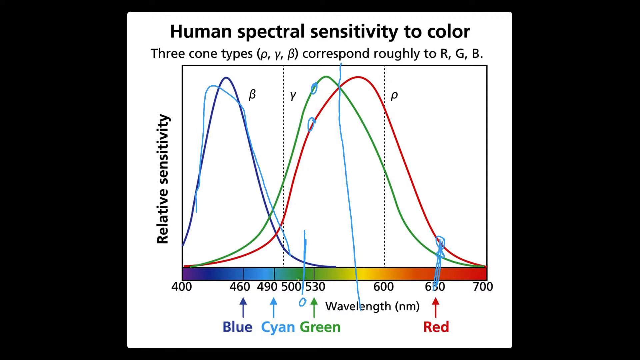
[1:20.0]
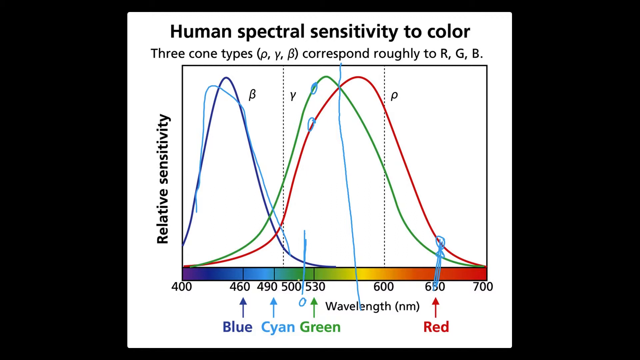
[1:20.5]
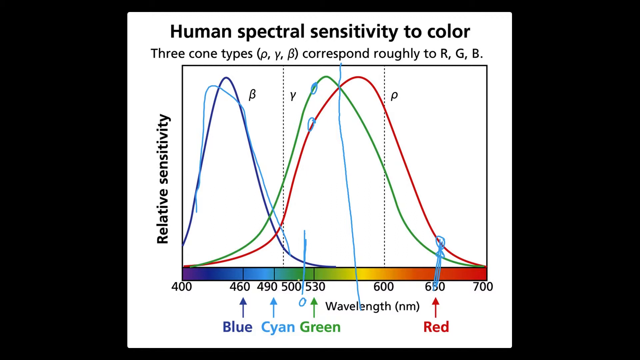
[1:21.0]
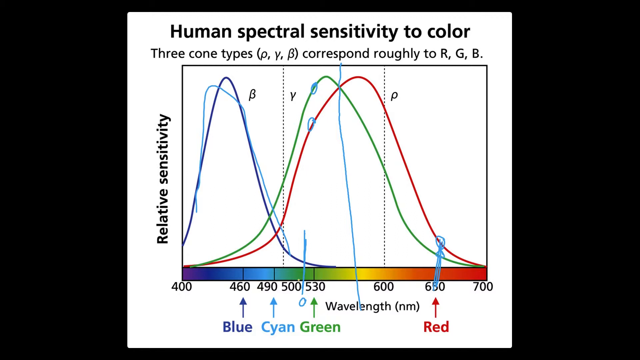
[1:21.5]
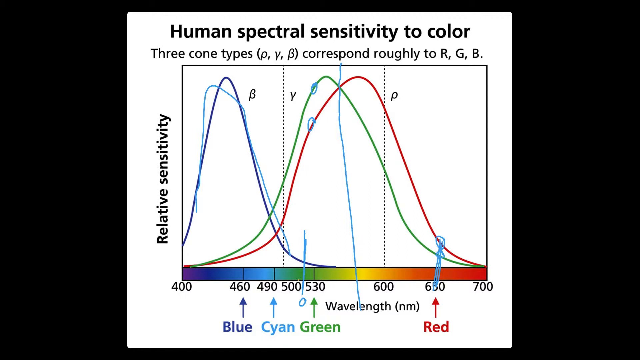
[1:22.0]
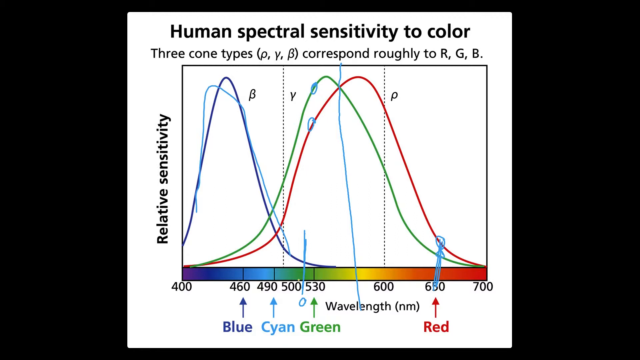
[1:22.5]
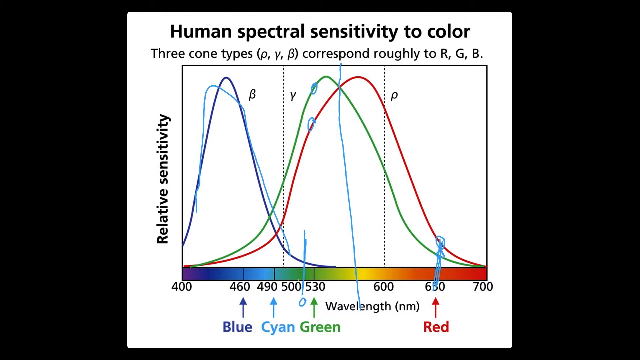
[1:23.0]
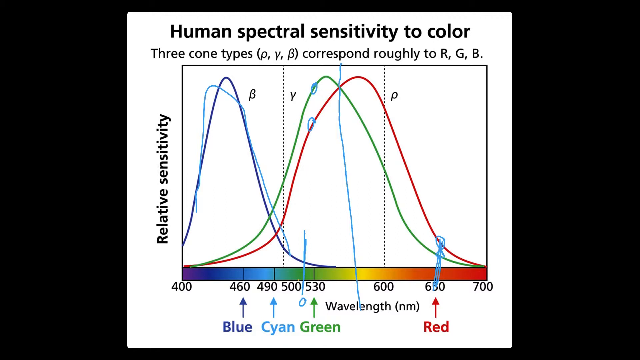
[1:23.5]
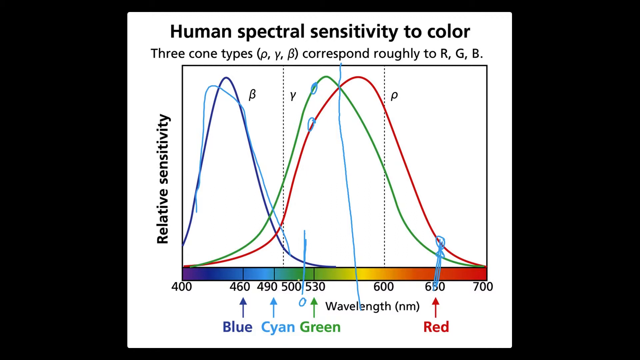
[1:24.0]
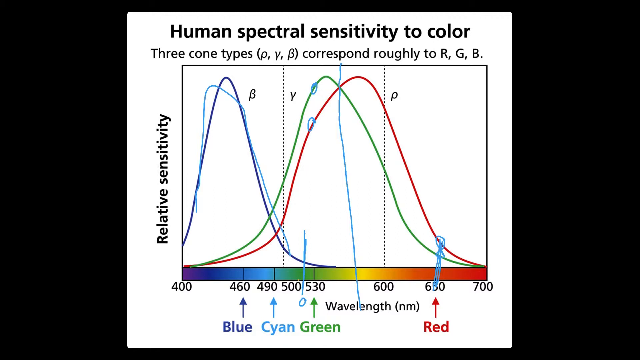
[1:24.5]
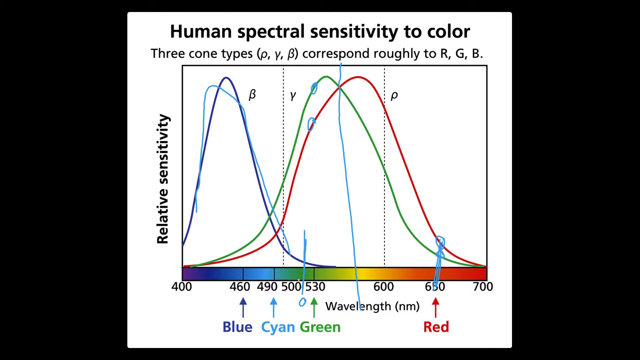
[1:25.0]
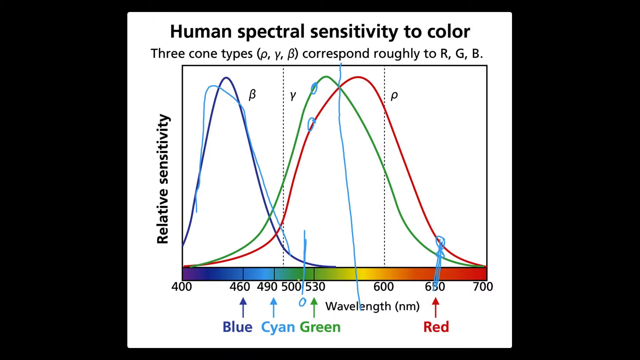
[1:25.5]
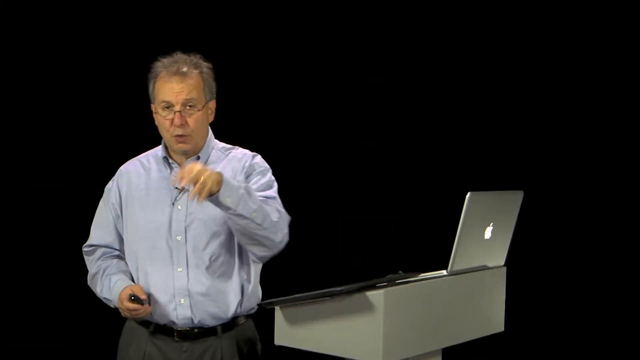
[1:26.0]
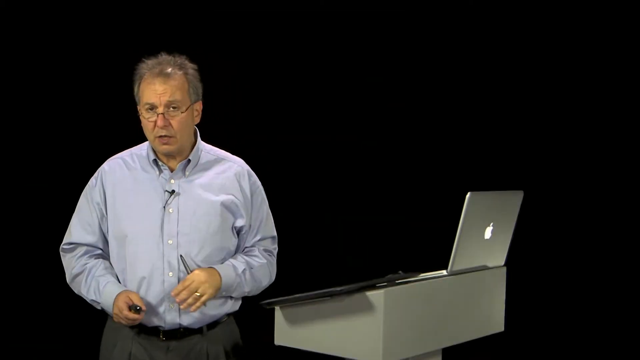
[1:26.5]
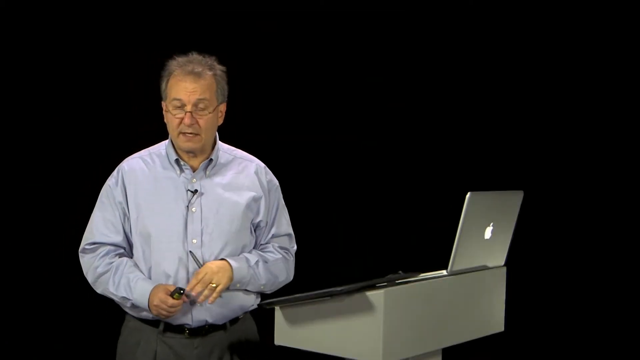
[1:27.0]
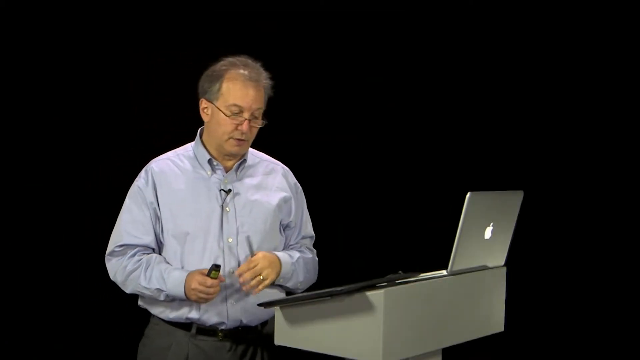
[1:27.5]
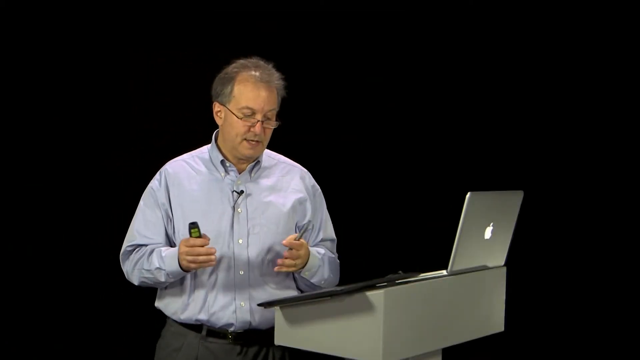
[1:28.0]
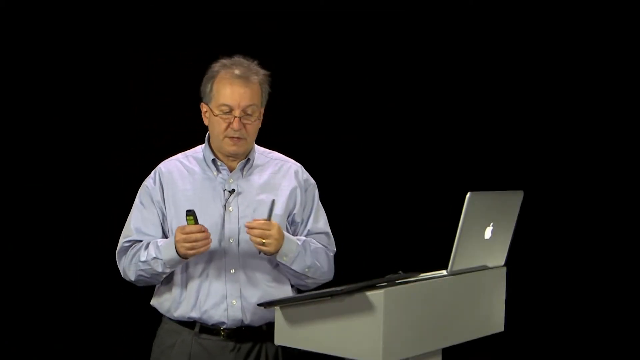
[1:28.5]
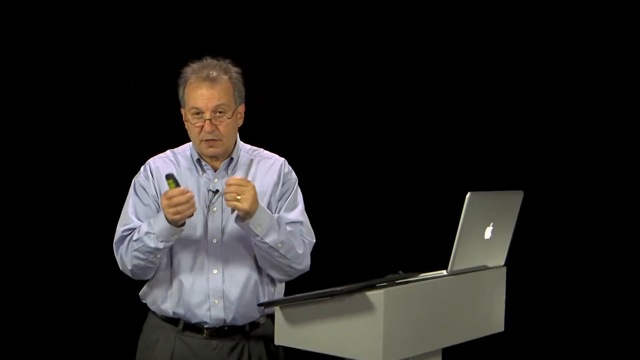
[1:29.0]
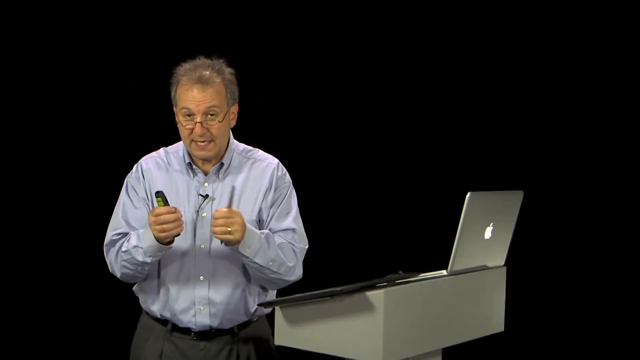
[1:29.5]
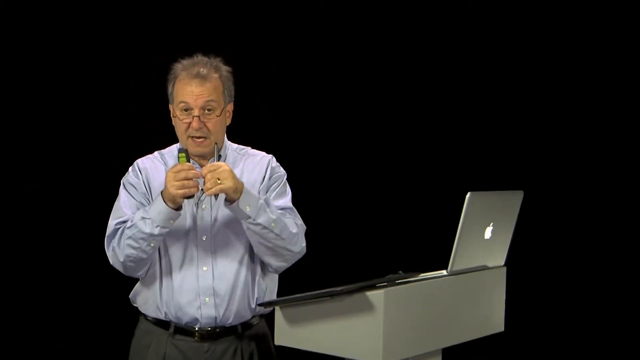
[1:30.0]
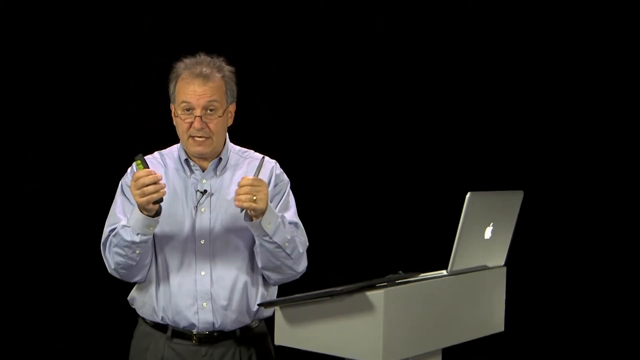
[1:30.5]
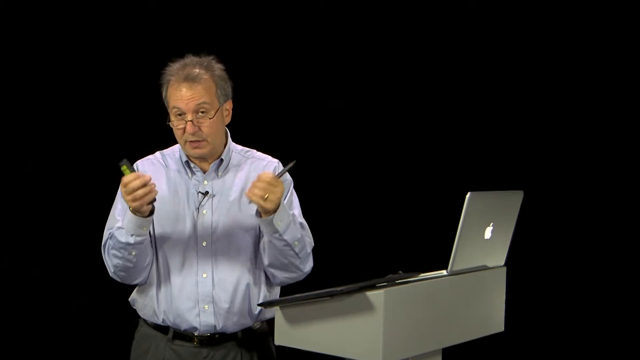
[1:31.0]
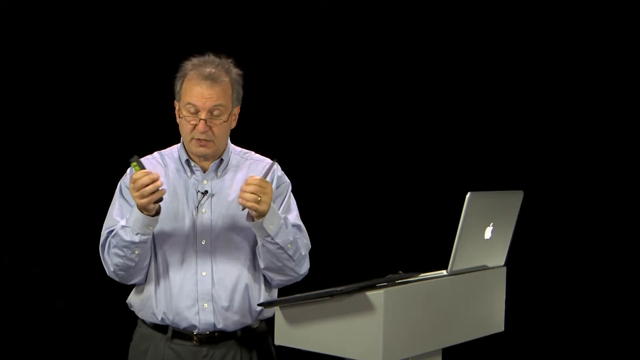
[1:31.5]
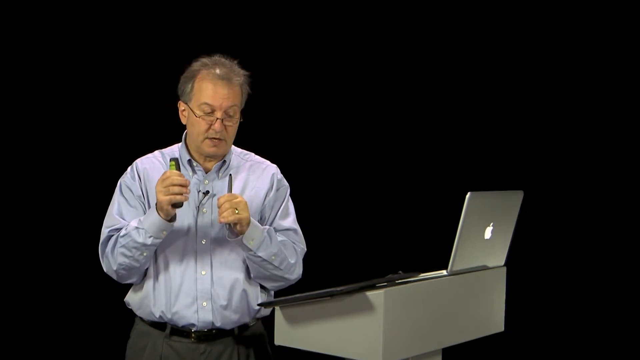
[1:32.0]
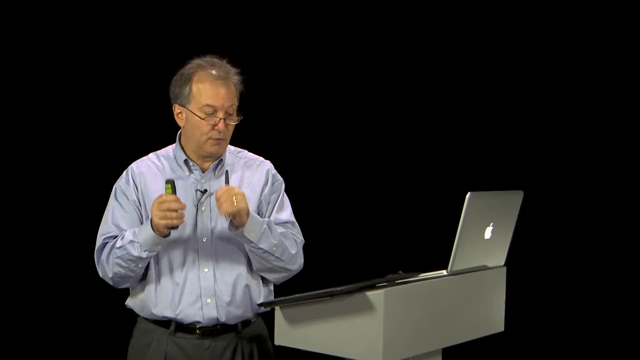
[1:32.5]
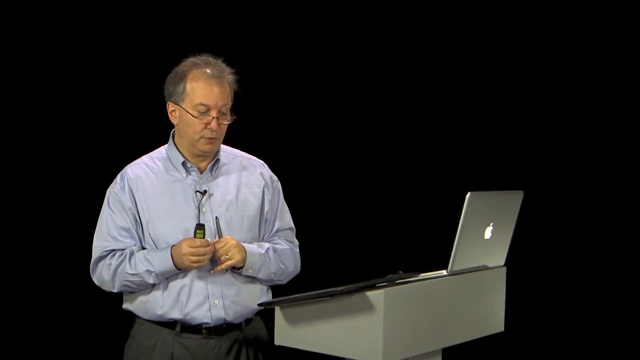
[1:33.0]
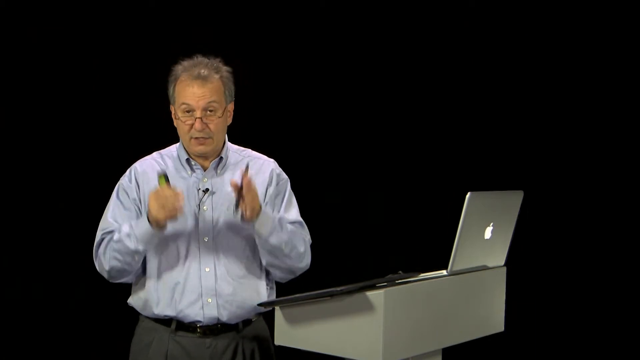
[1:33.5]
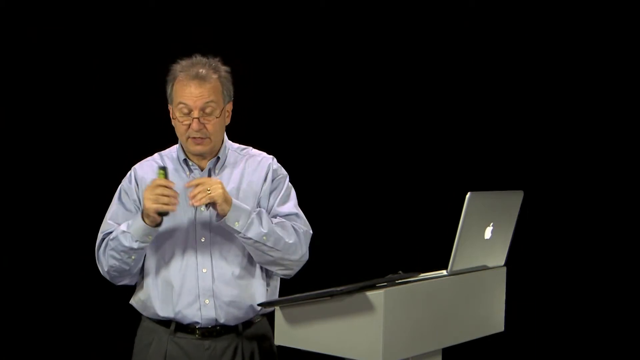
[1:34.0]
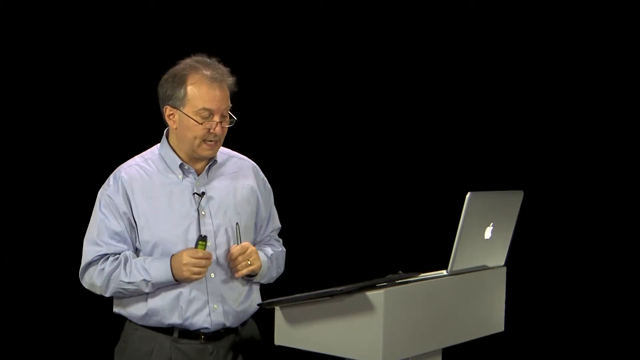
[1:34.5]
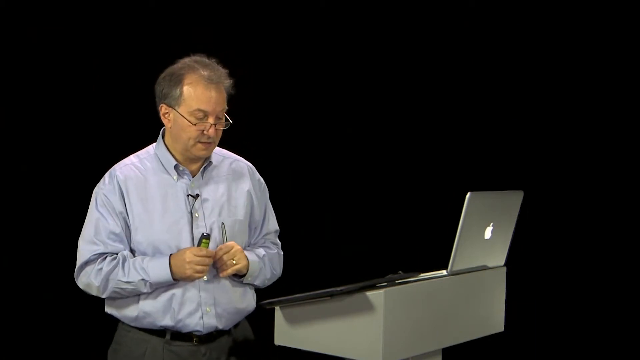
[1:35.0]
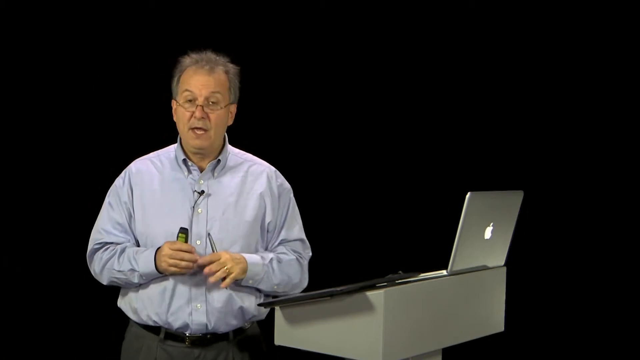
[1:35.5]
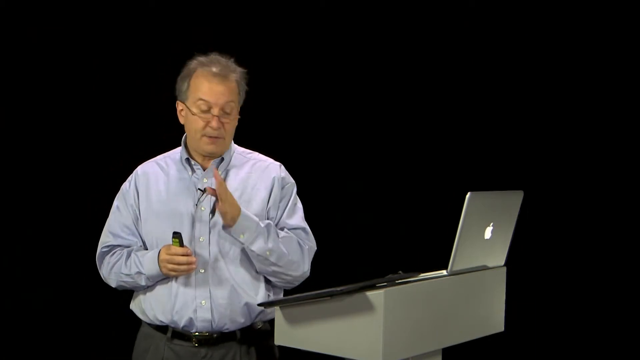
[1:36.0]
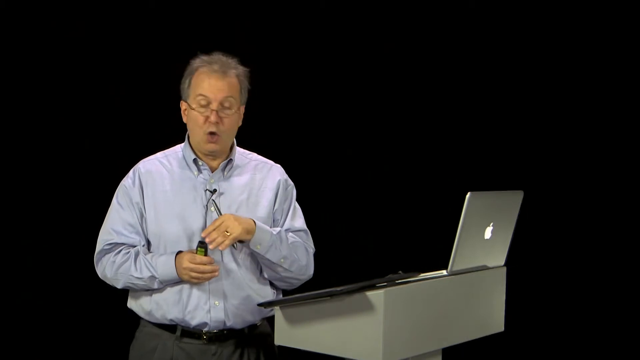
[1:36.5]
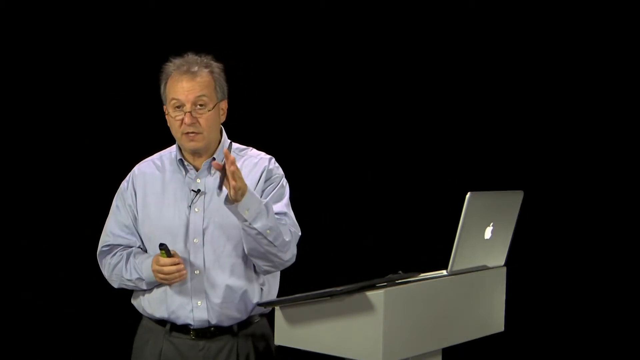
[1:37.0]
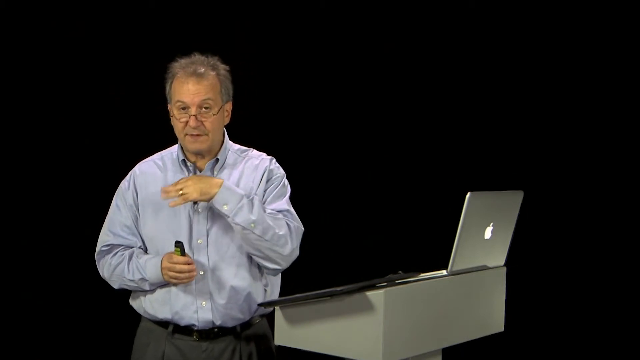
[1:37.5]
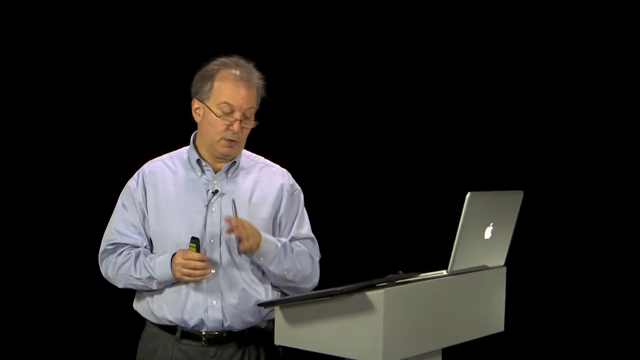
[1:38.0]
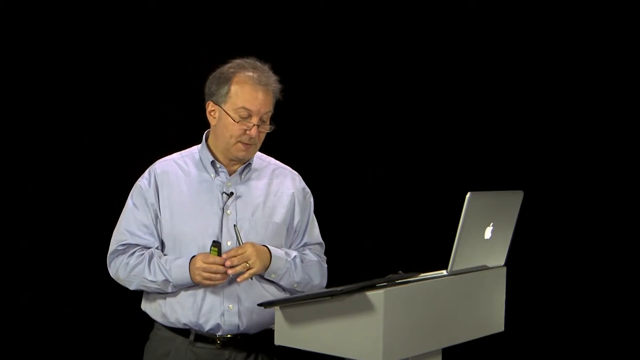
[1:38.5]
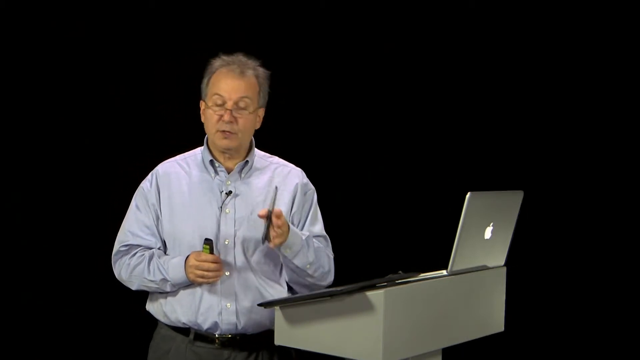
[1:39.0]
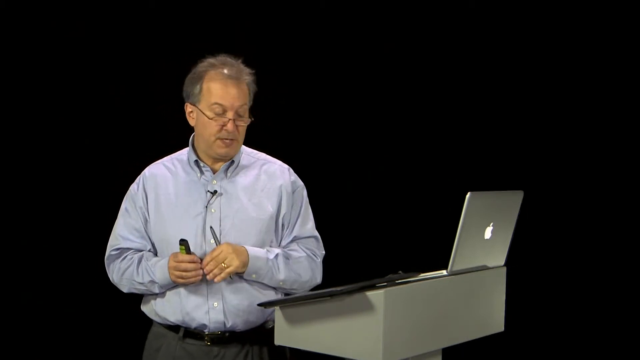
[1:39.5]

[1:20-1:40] The human spectral sensitivity to color graph is shown at the forefront of the screen, with relative sensitivity on the y-axis and wavelengths on the x-axis corresponding to the different types of cones. The graph's colors are on top of a white background. The background is completely black, and a computer screen is in the front.